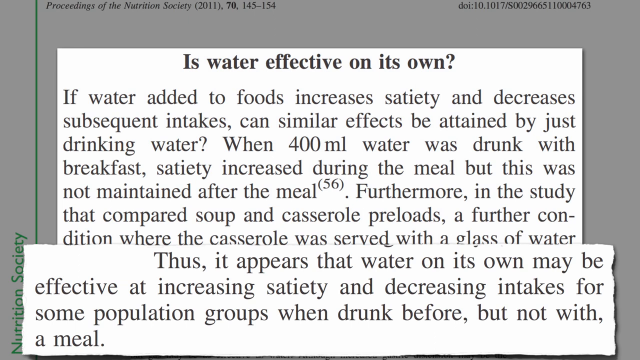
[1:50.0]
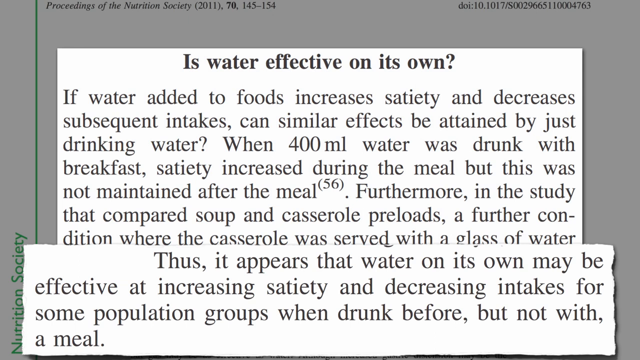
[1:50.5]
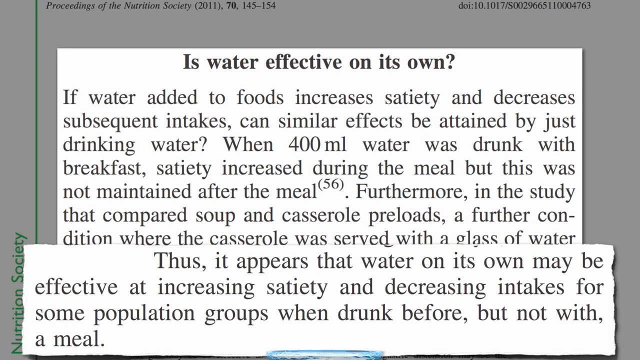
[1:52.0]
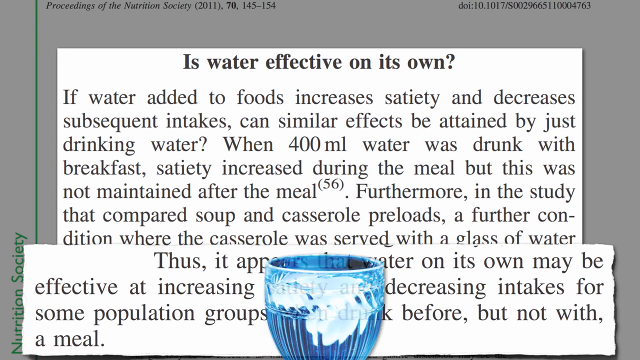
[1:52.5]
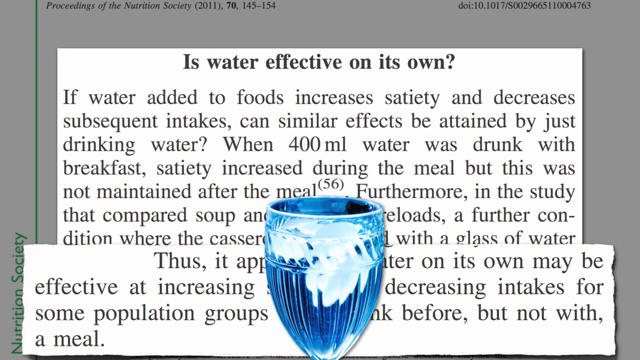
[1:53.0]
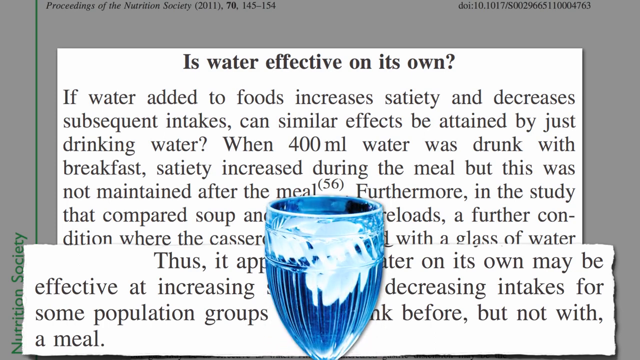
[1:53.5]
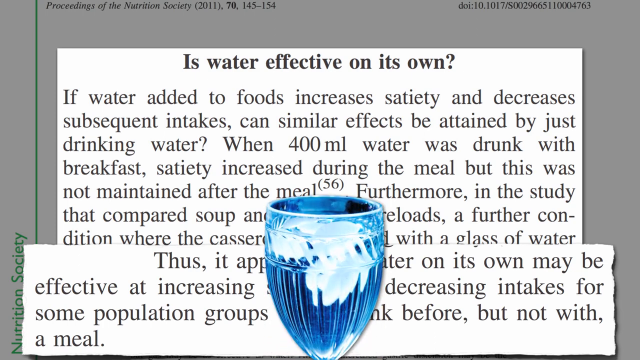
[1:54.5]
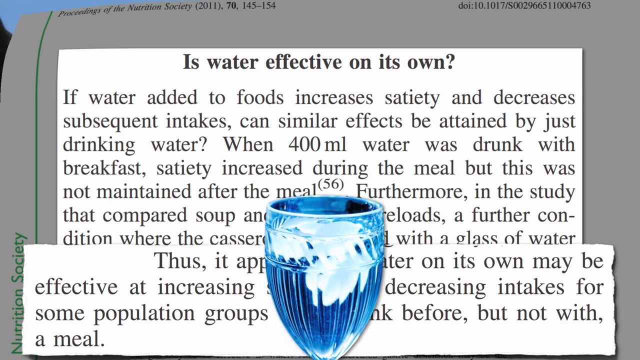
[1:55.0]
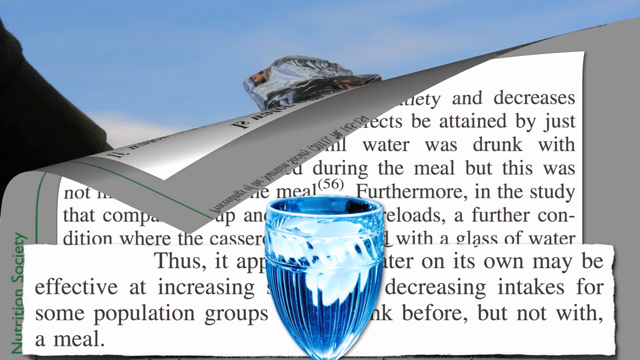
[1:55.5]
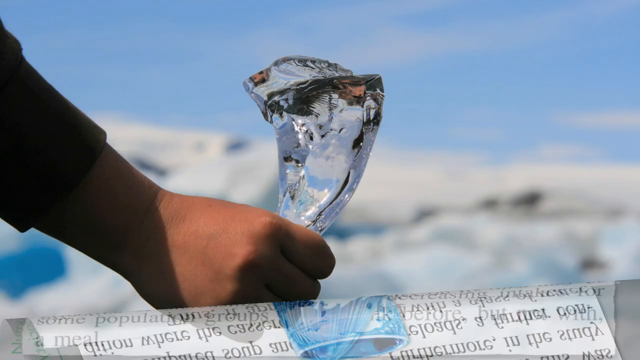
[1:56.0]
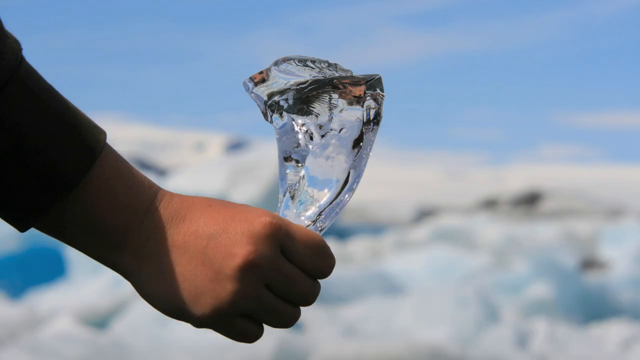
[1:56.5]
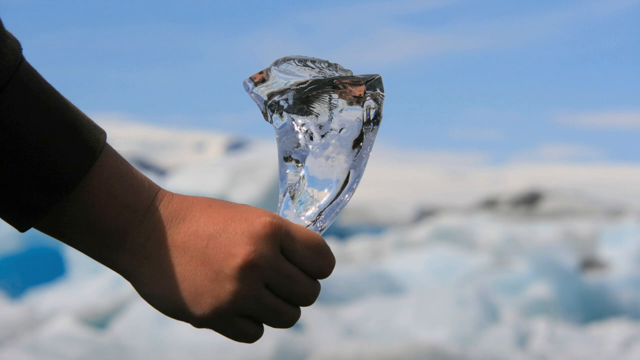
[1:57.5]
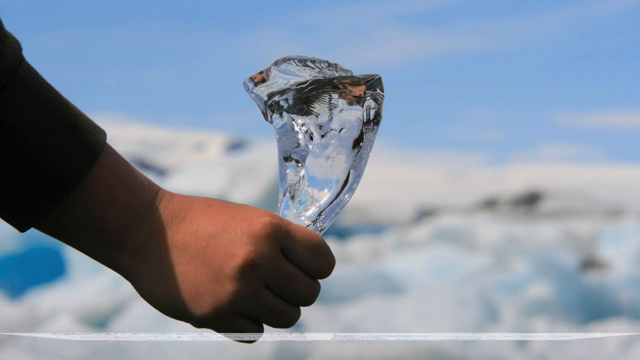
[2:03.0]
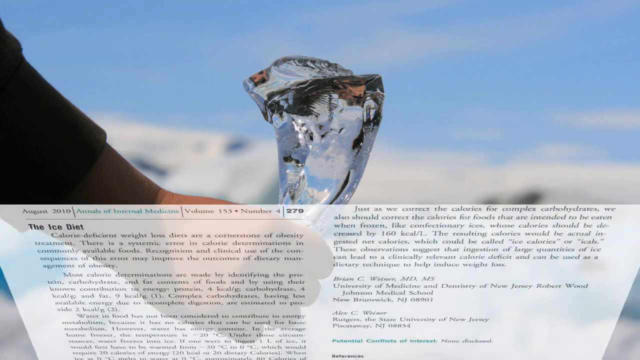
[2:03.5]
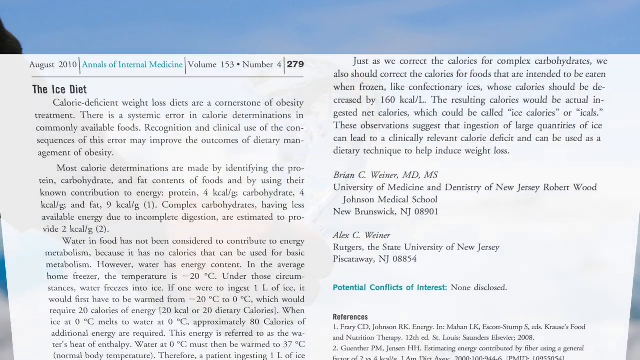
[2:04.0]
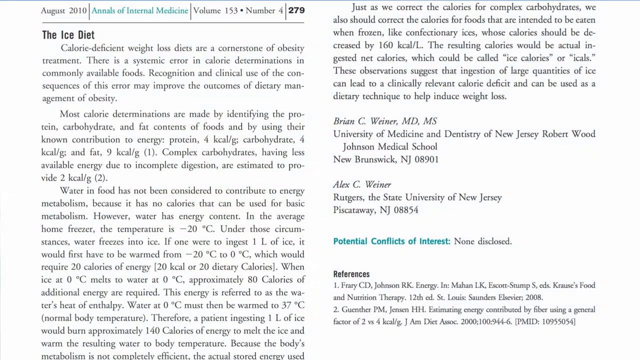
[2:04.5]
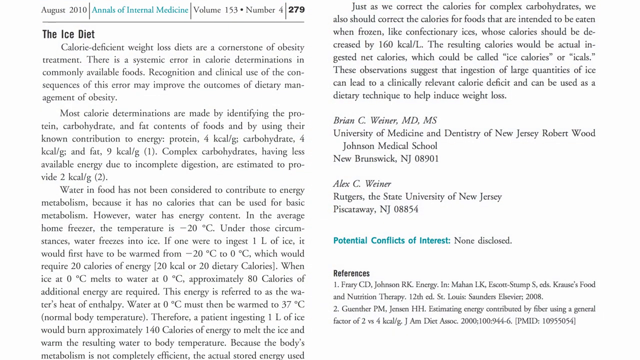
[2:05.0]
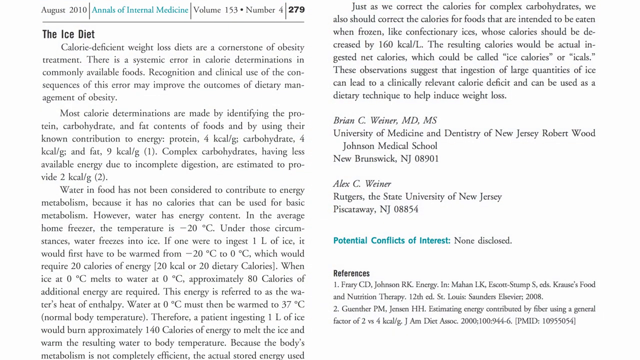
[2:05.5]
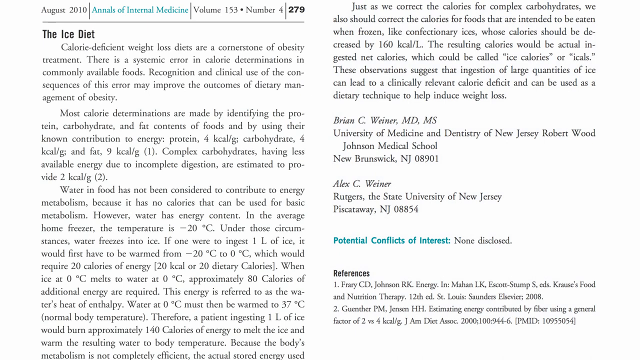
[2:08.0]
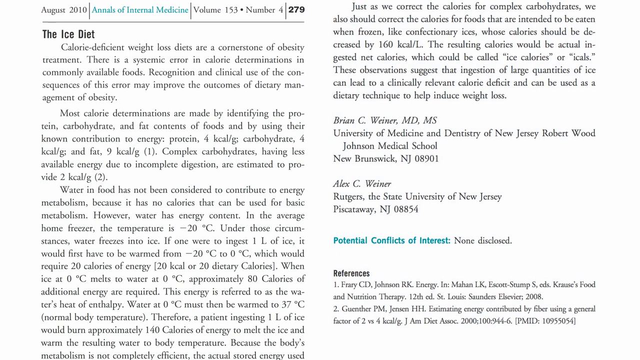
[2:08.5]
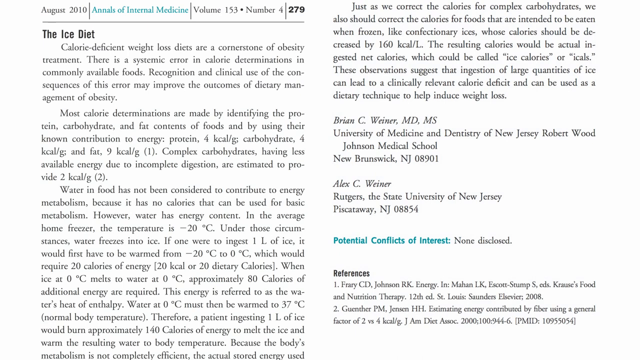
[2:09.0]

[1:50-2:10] A white background with black text shows "Proceedings of the Nutritional Society 2011" at the very top left, with "is water effective on its own?" below it. The text continues: "If water added to foods increases satiety and decreases subsequent intakes, can similar effects be attained by just drinking water? When 400 milliliter of water was drunk with the breakfast, satiety increased during the meal, but this was not maintained after the meal. Furthermore, in the study that compared soup and casserole preloads, a further condition where the casserole was served with a glass of water." It also reads "Thus, it appears that water on its own may be effective at increasing satiety and decreasing intakes for some population groups when drunk before, but not with." A blue glass is then superimposed over the text. The video then switches to an image of a person holding what appears to be some kind of icicle, piece of glass, or crystal.